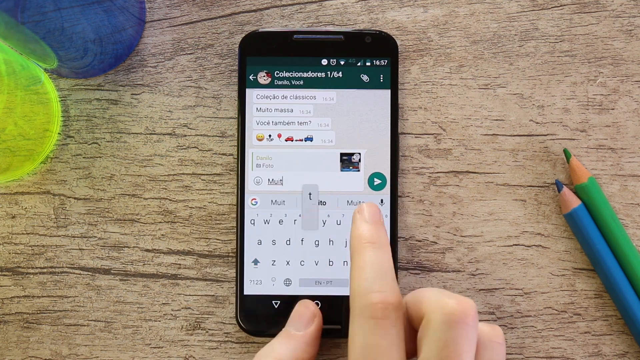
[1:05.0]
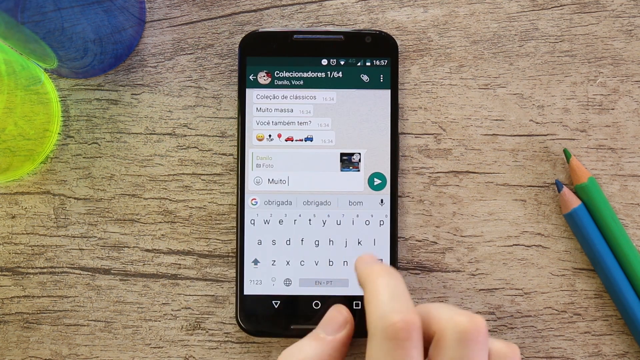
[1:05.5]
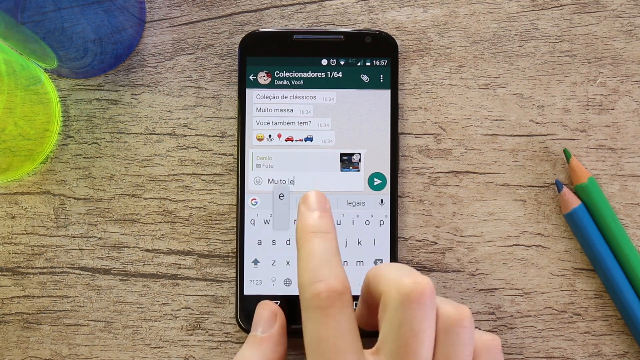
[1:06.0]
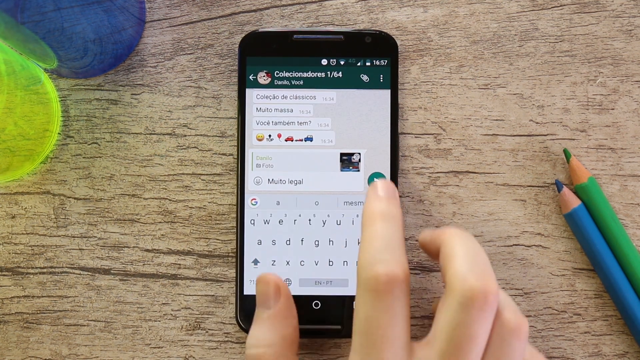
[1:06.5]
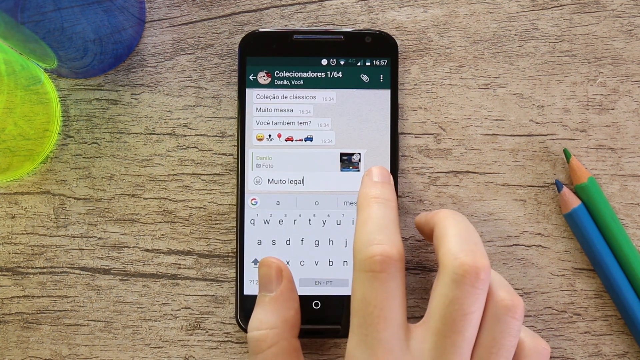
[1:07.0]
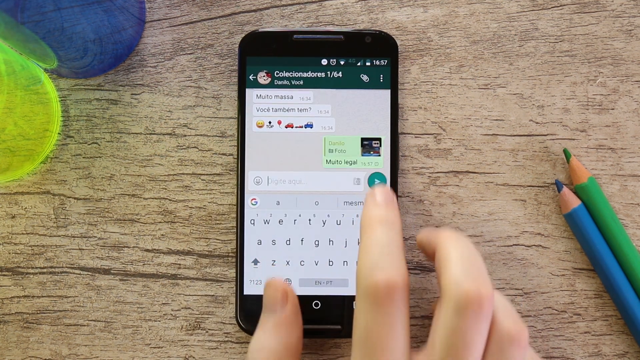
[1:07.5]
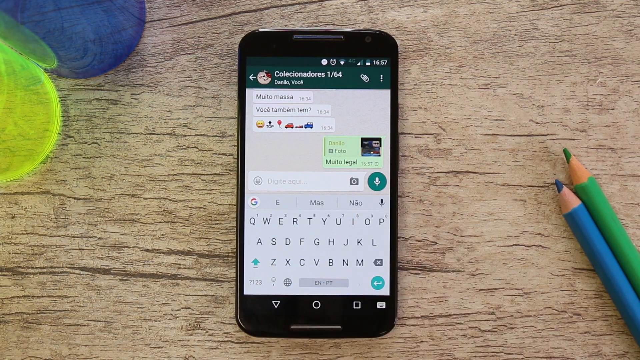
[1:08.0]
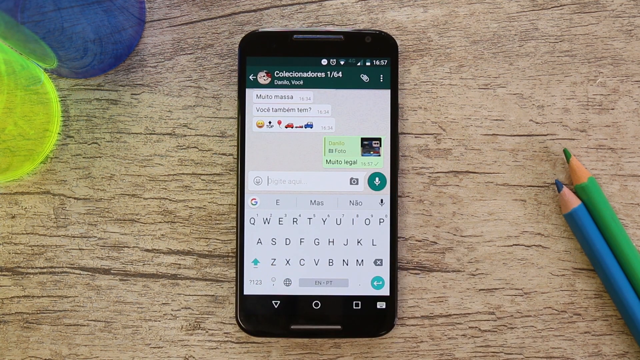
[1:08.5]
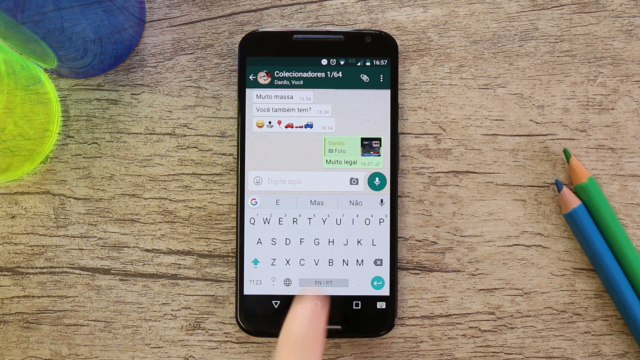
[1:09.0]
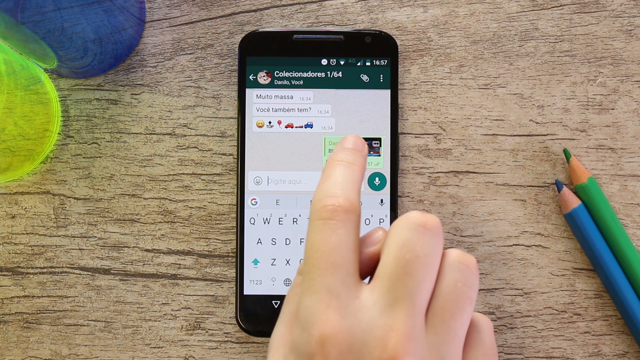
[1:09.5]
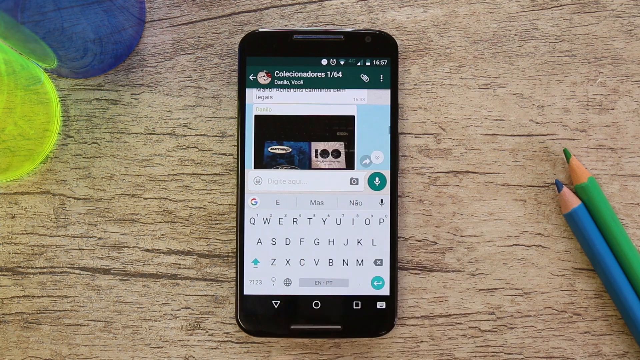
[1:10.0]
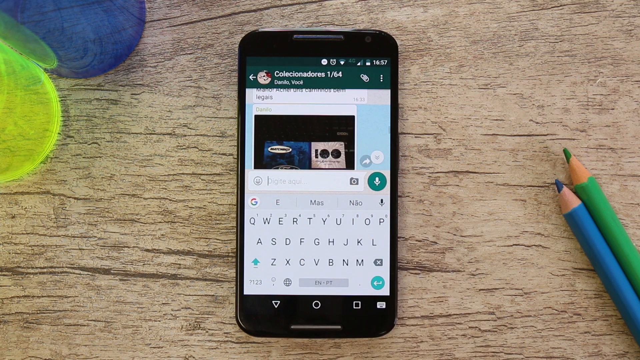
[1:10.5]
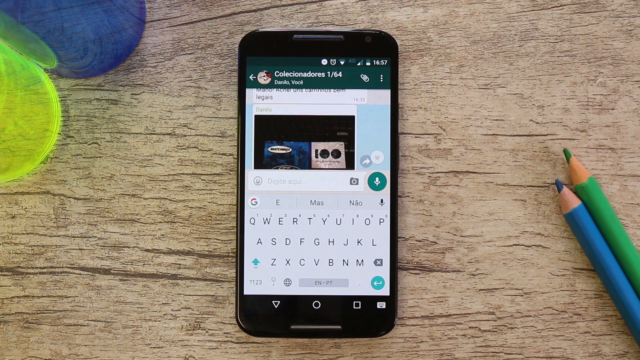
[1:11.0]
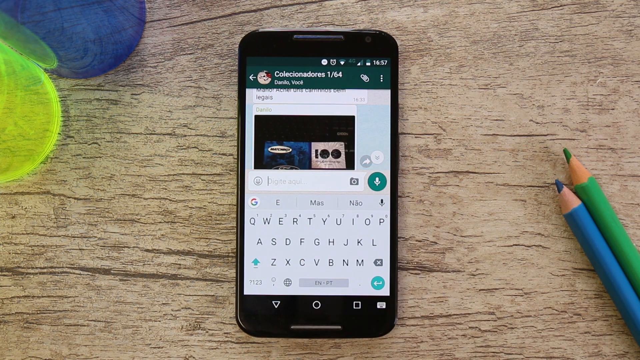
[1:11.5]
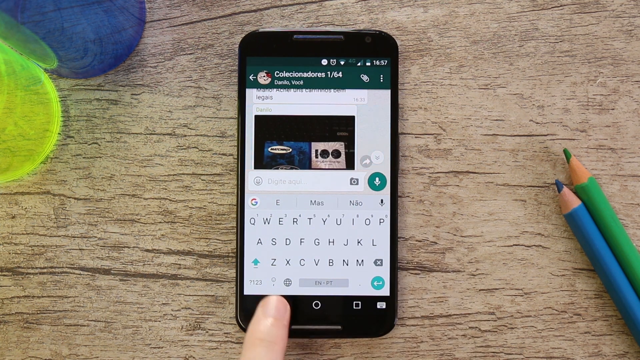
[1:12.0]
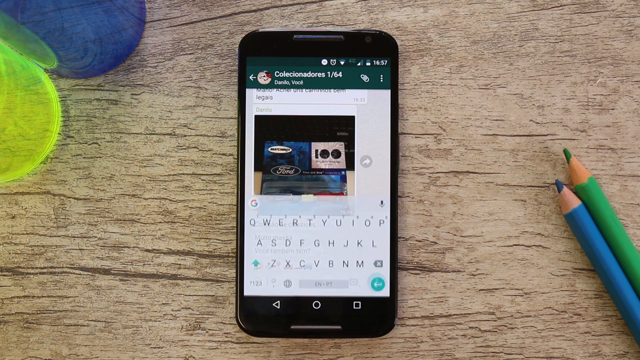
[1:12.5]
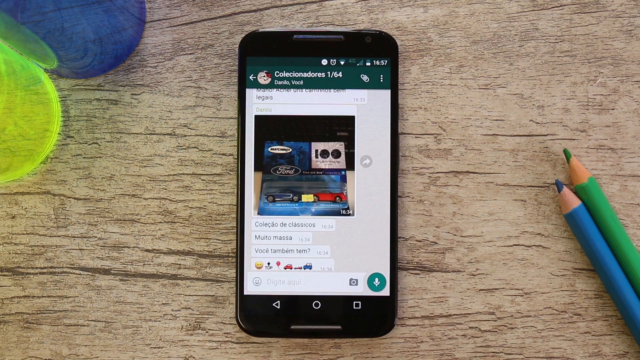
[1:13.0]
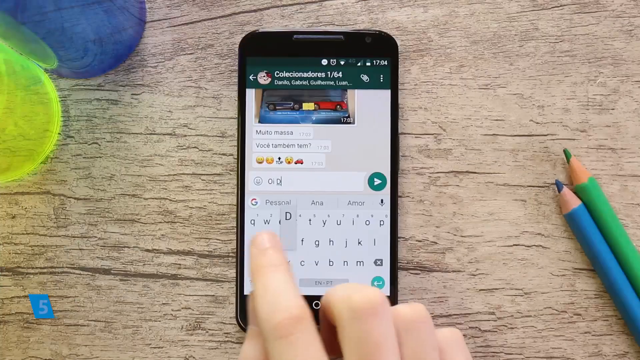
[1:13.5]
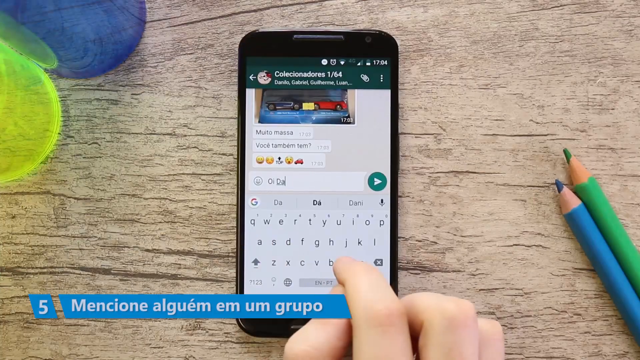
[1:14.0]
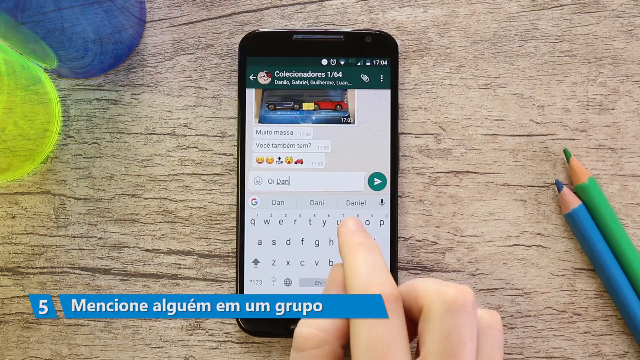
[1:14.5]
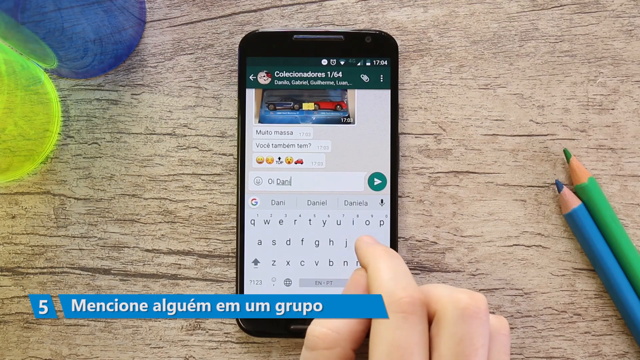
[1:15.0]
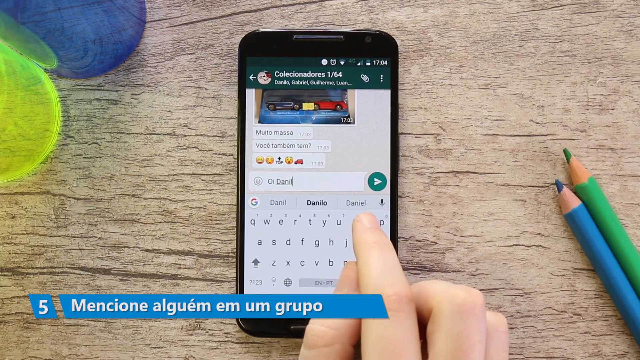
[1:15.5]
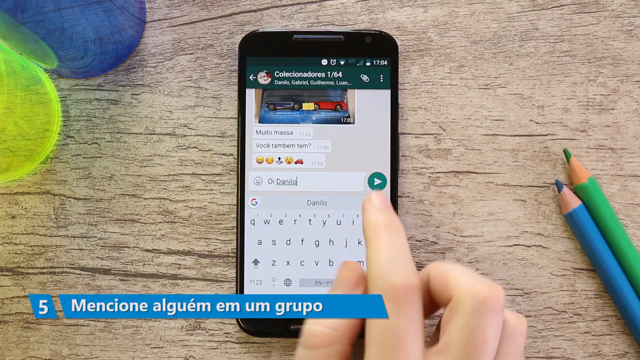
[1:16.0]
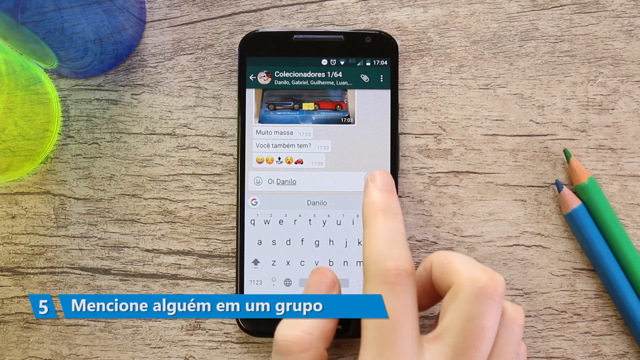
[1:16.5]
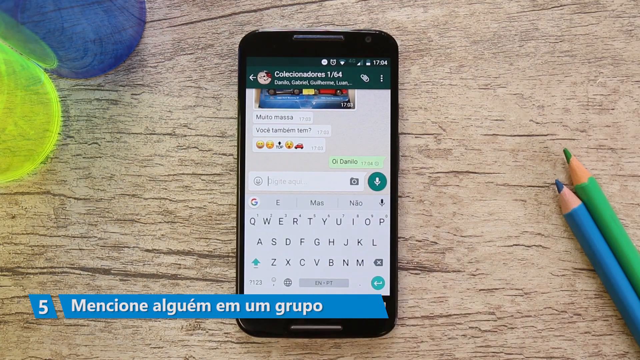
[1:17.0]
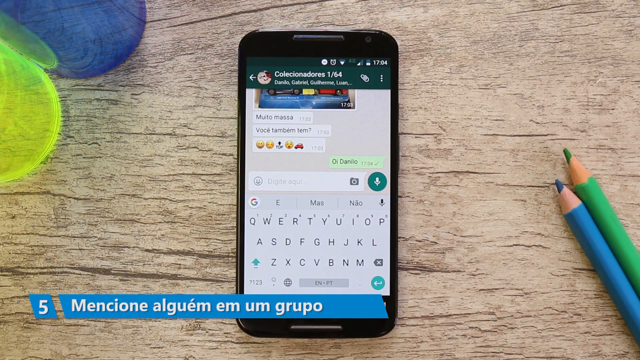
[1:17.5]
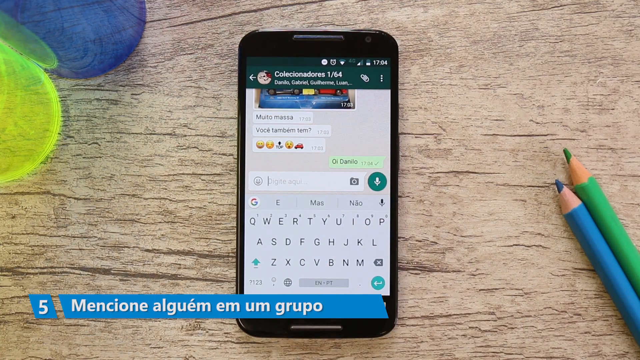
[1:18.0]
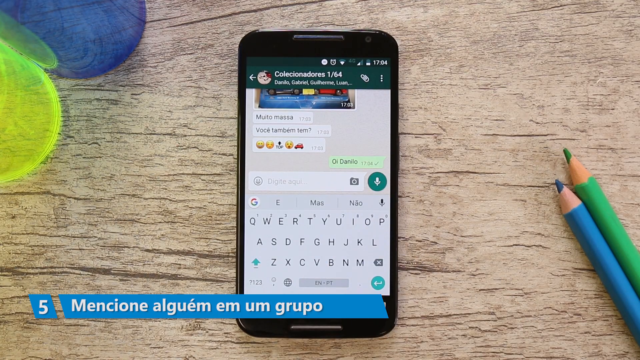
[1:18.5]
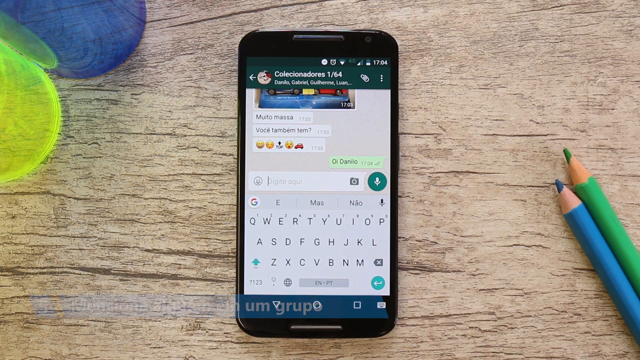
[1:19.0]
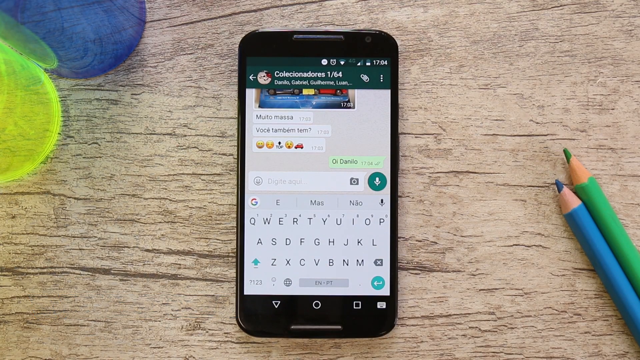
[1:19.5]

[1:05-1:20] The person types a message with the photo of the Ford matchbox cars. The number five is written at the bottom in the blue square, with "mencion al grupo" and "un grupo". The person types text onto the Ford picture, then taps an arrow-like icon at the bottom of the app, a left triangle icon, sending the message. At the top of the app, text reads "one out of 64". The text the person sends apparently reads "Hoy de nilo" and shows up in a light green box. The other user's messages also appear to be in a light green box.